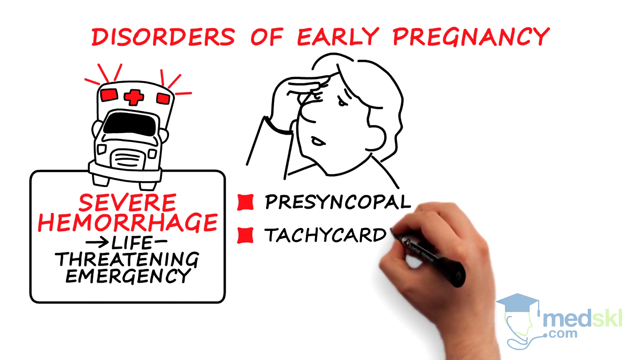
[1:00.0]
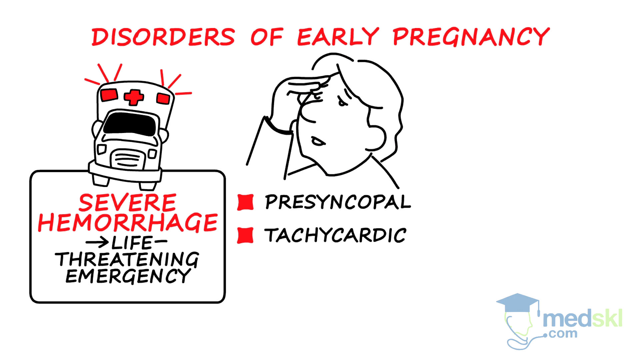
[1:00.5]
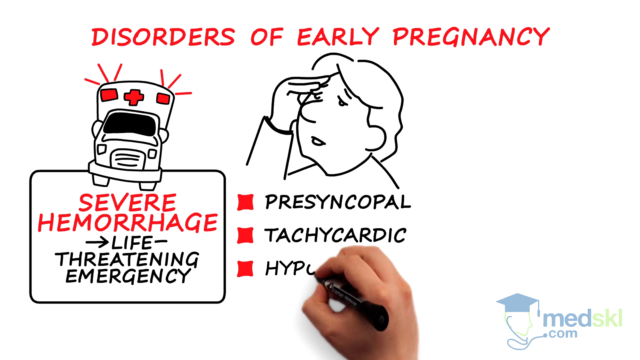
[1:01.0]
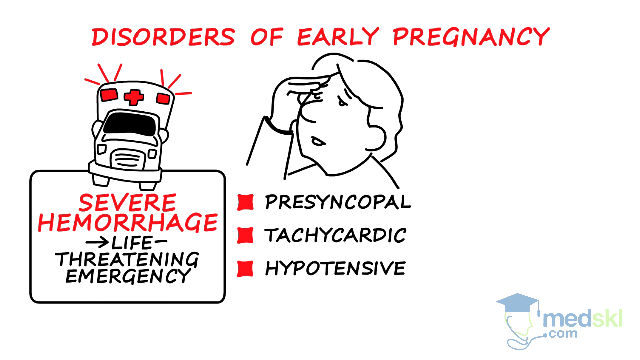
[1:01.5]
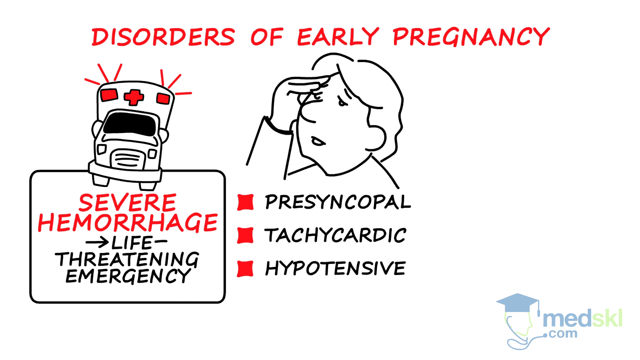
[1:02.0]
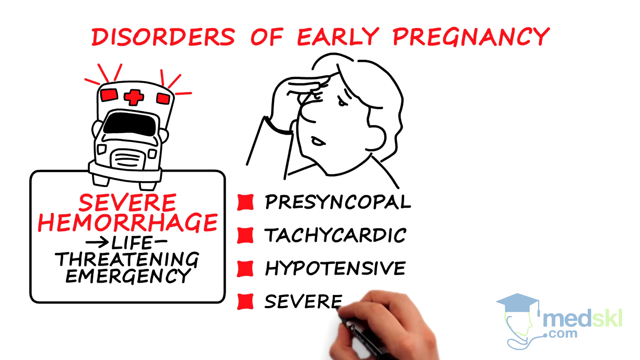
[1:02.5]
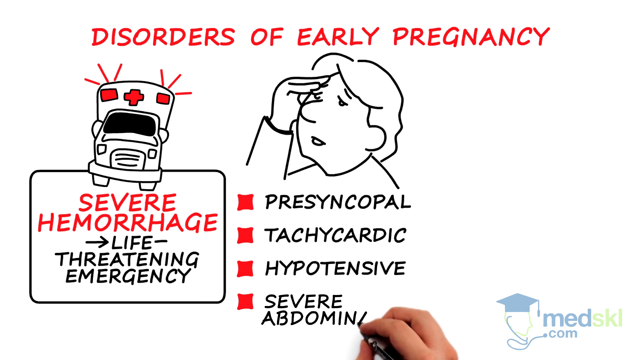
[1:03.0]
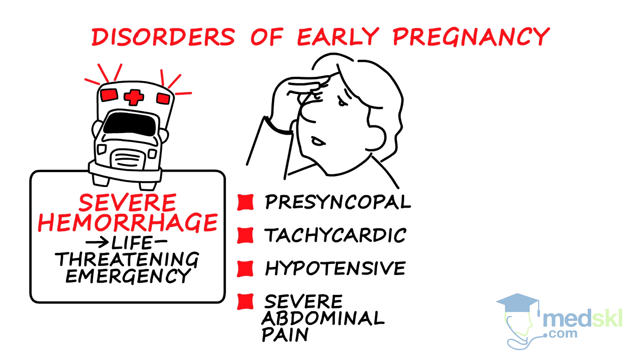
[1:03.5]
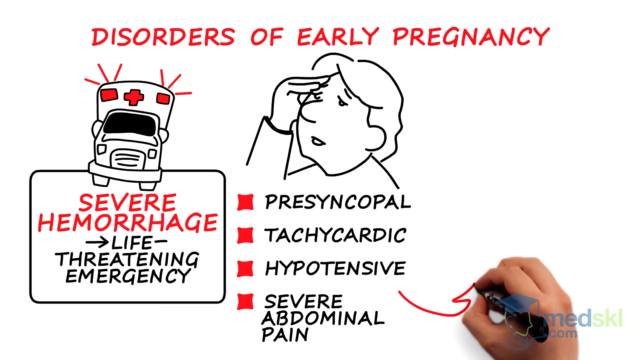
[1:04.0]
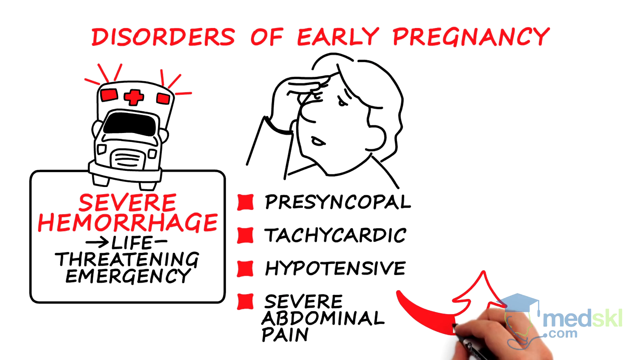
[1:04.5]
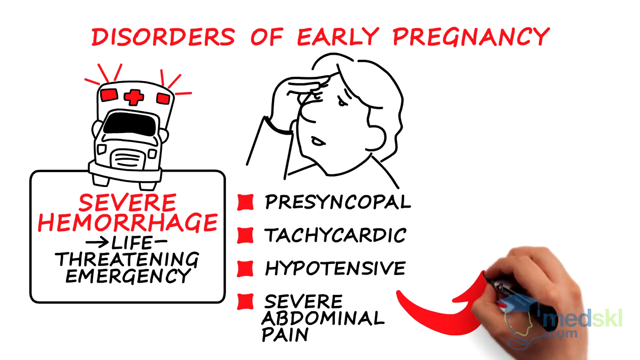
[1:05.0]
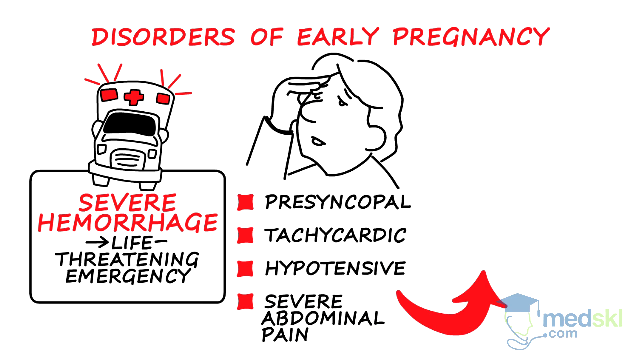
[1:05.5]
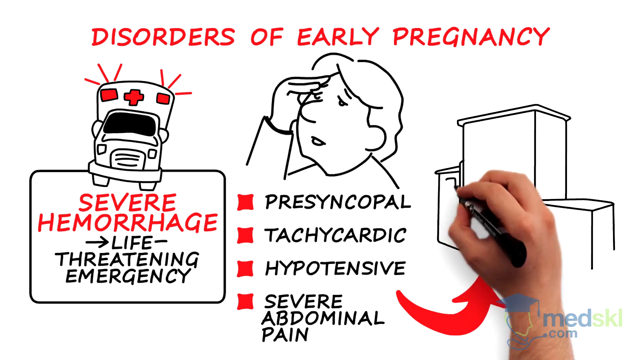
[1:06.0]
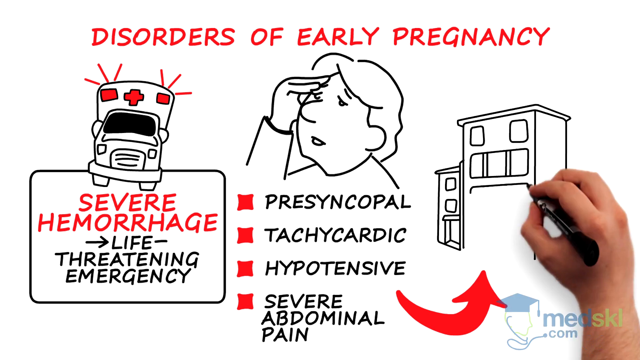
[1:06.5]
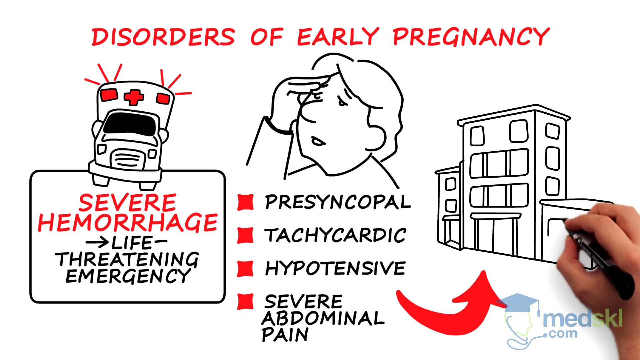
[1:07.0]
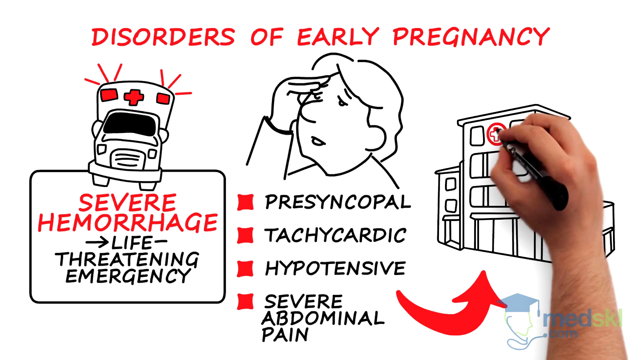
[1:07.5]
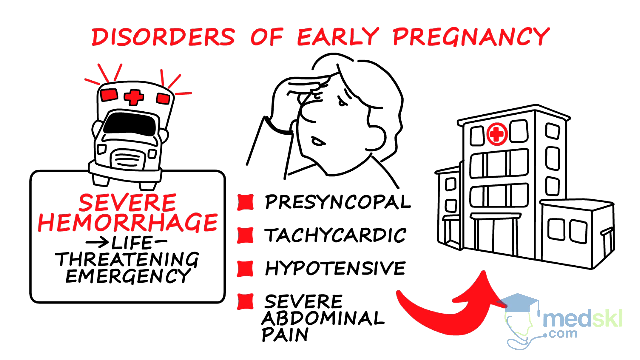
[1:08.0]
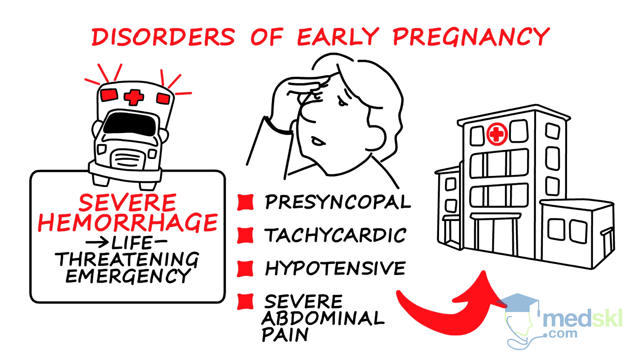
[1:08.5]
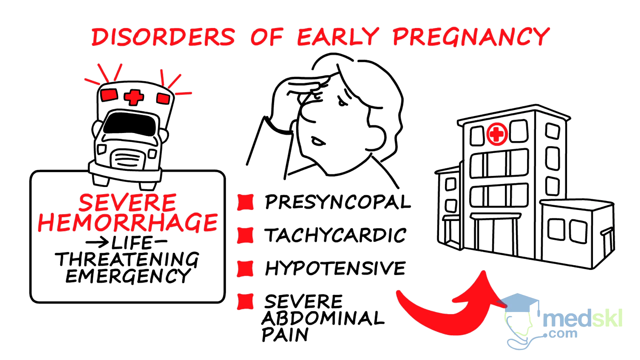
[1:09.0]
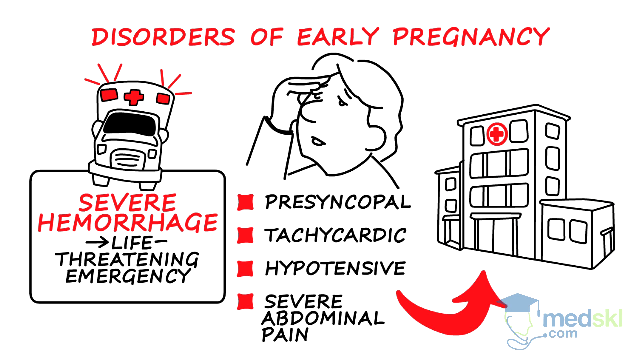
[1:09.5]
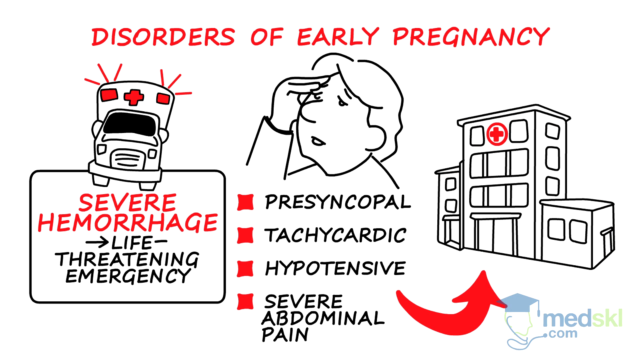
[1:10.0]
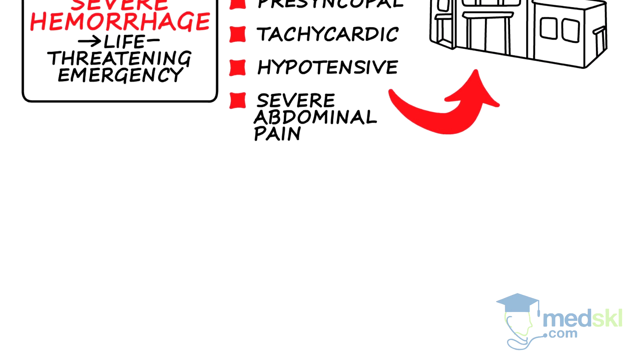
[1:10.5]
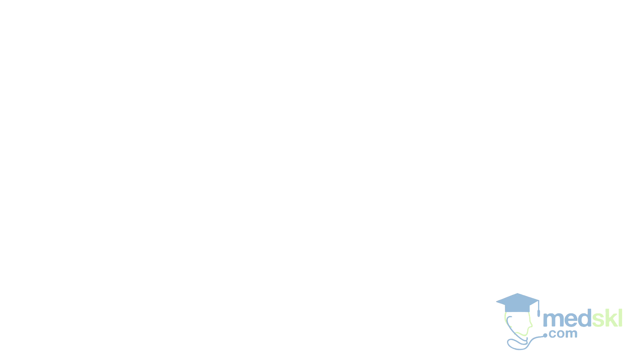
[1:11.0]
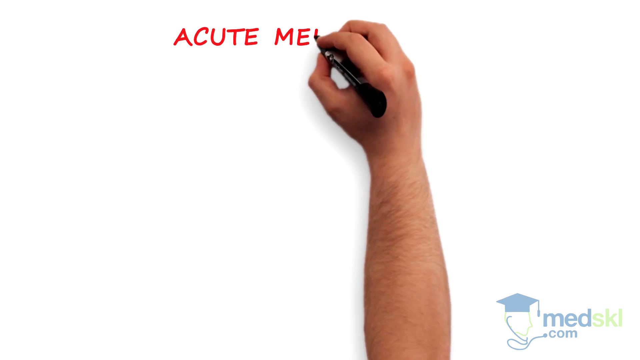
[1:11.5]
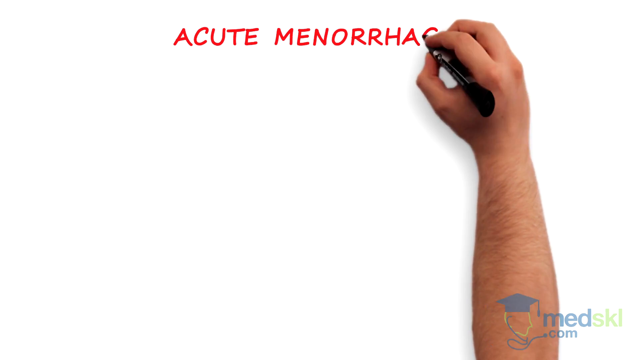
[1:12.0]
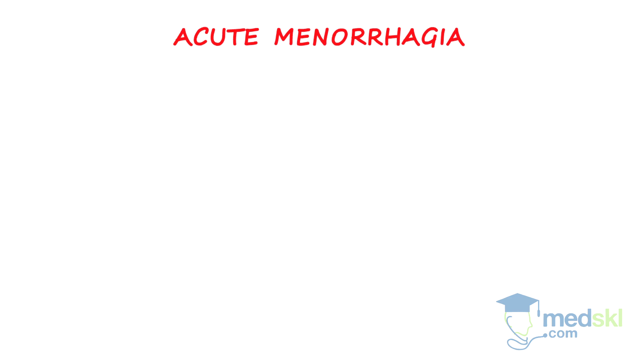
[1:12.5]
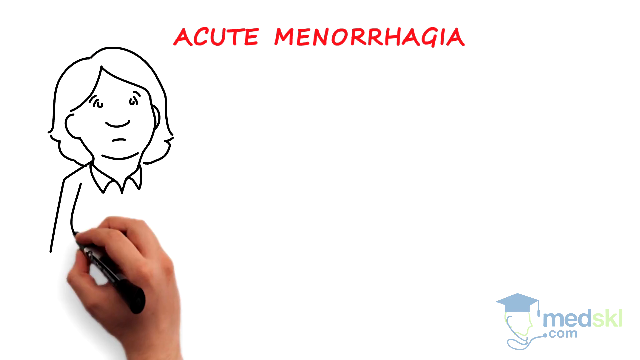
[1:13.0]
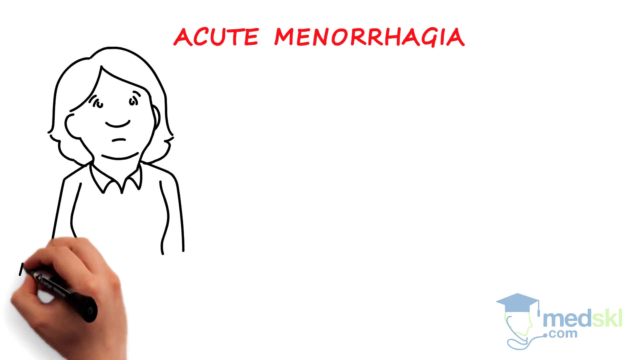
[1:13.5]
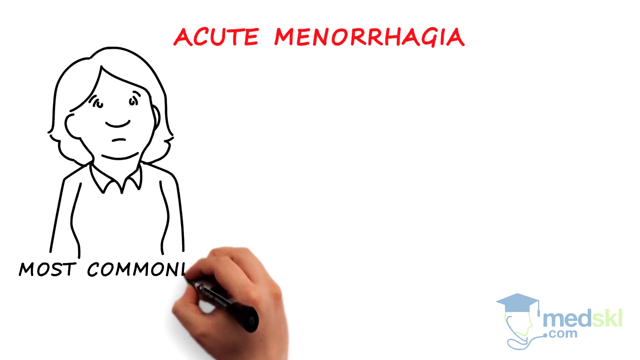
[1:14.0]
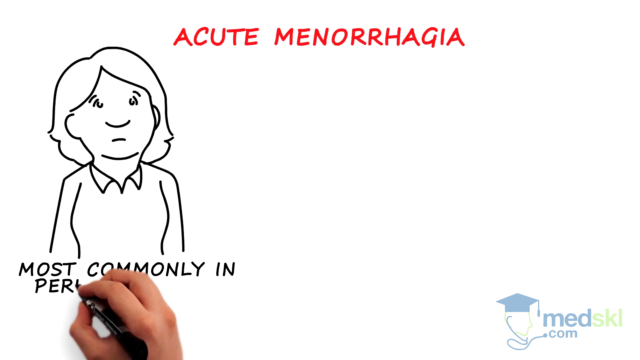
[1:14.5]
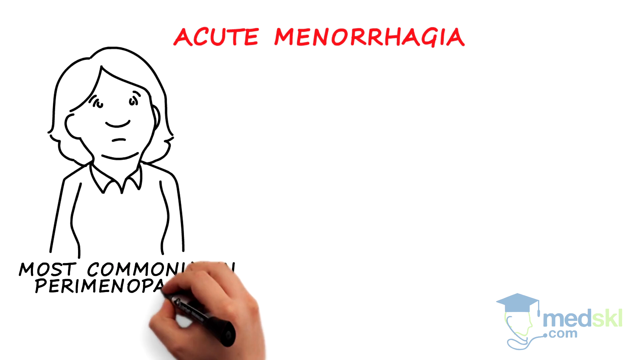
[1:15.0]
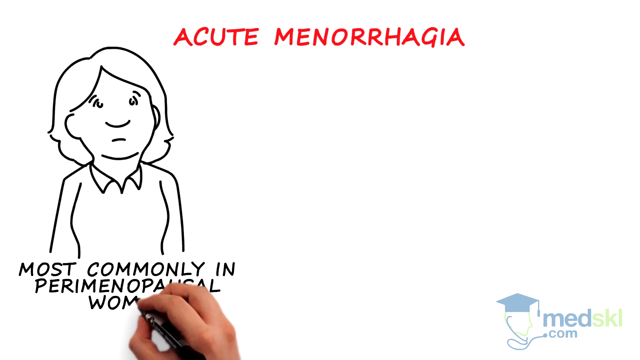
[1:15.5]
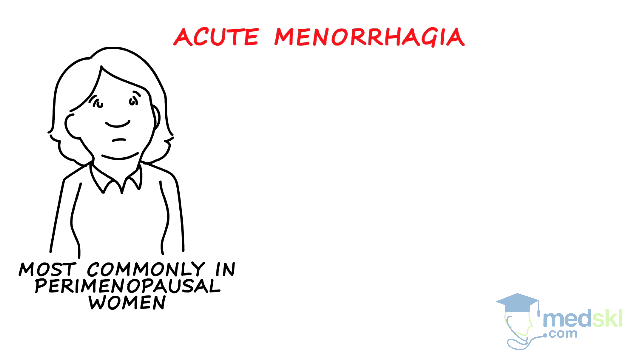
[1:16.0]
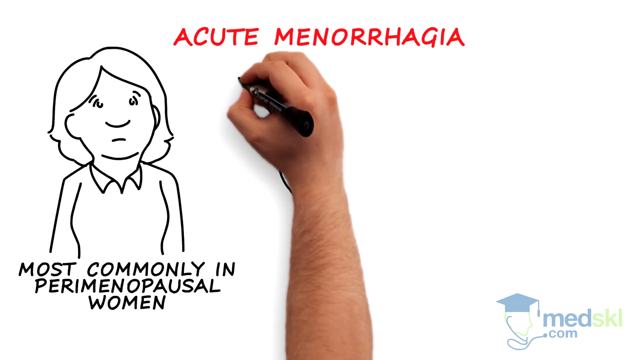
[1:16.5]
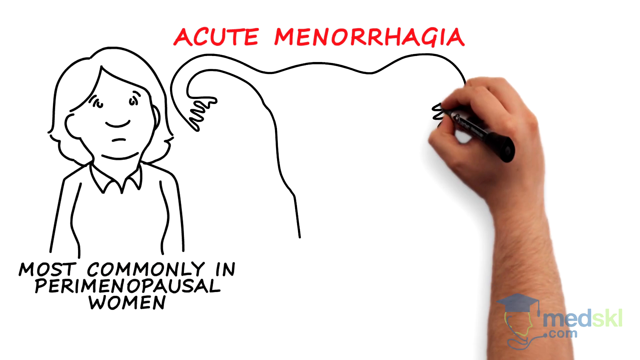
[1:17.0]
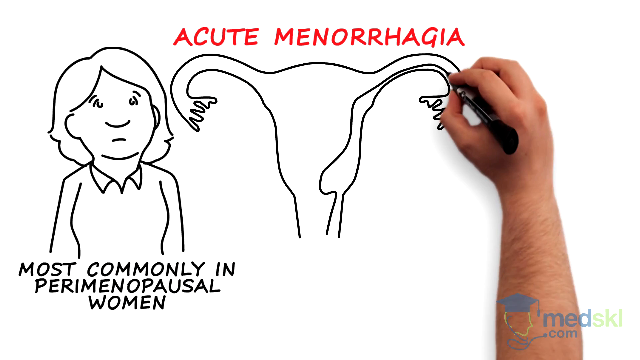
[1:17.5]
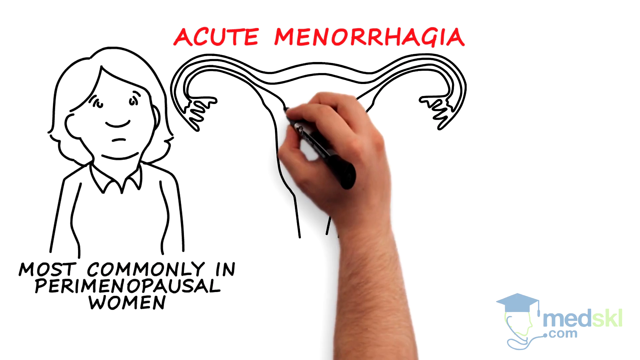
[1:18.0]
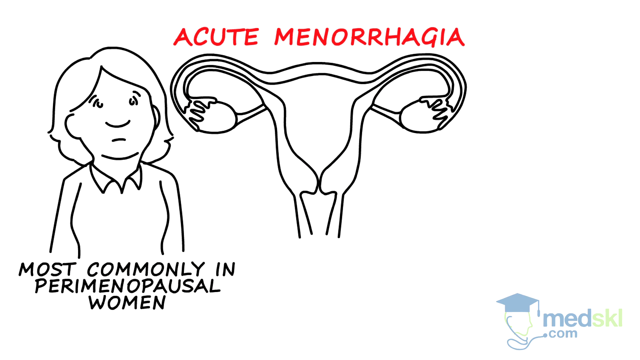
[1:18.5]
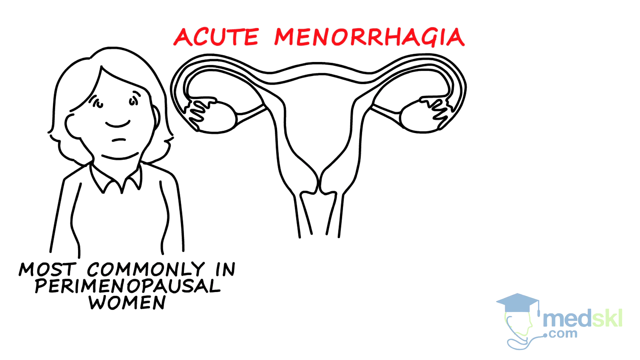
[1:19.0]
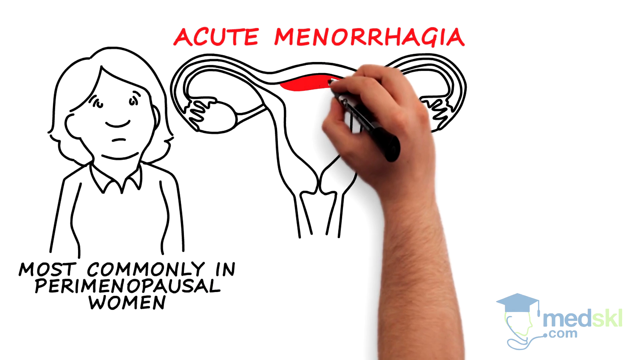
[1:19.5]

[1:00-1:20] Under "presyncopal," the hand writes "tachycardic," then "hypotensive," and then a fourth description, "severe abdominal pain." It draws a curved red arrow pointing to the right, and on the right side draws a hospital building with a red cross on top to indicate it is a hospital. The view then shifts downward to the right onto a blank white screen, where the hand draws a title at the top reading "acute menorrhagia." The hand draws a woman on the left side and writes underneath her "most commonly in perimenopausal women," then draws a uterus in the middle.